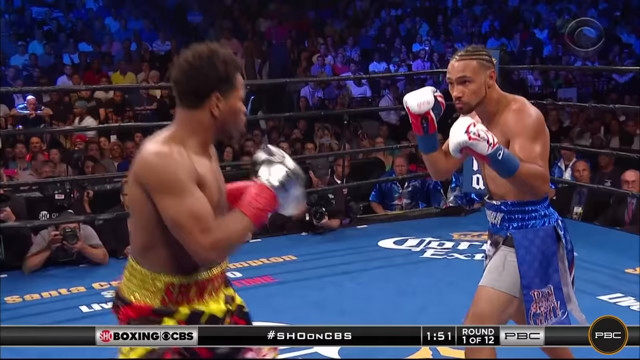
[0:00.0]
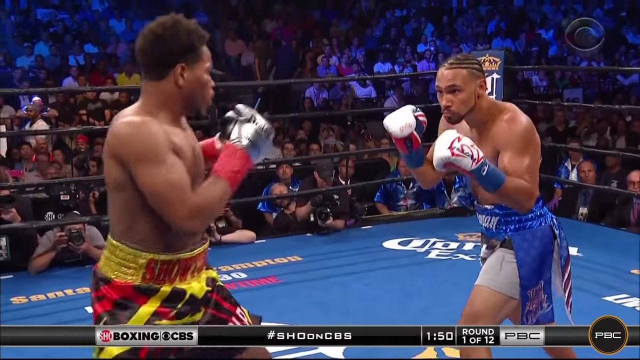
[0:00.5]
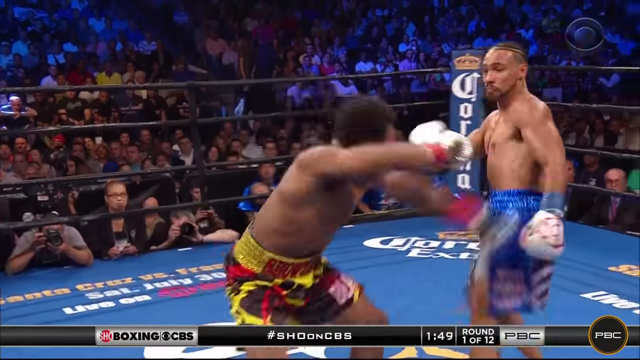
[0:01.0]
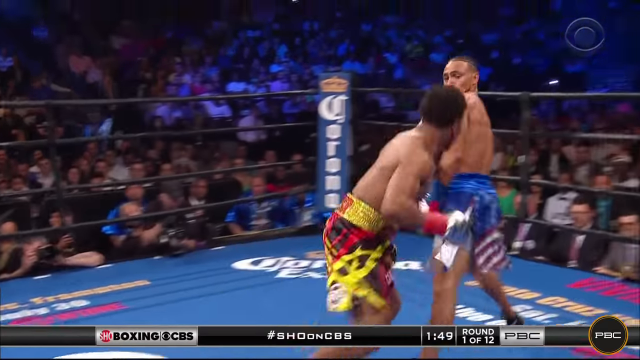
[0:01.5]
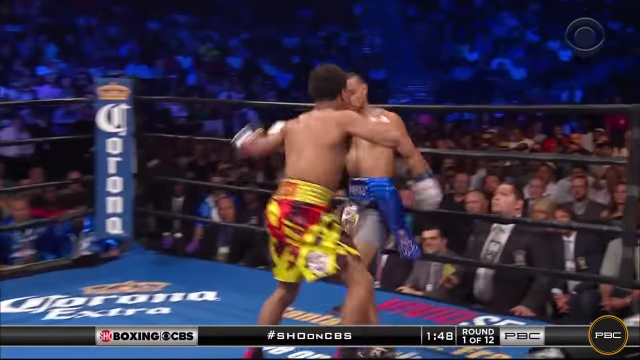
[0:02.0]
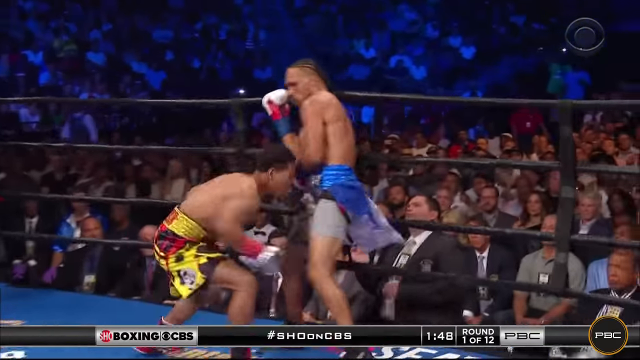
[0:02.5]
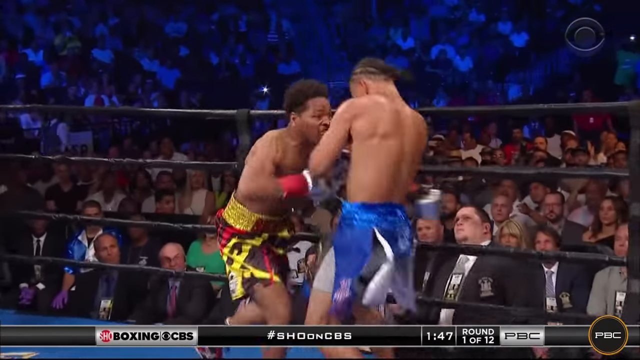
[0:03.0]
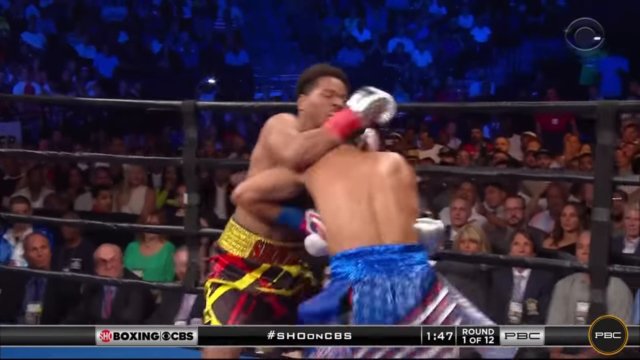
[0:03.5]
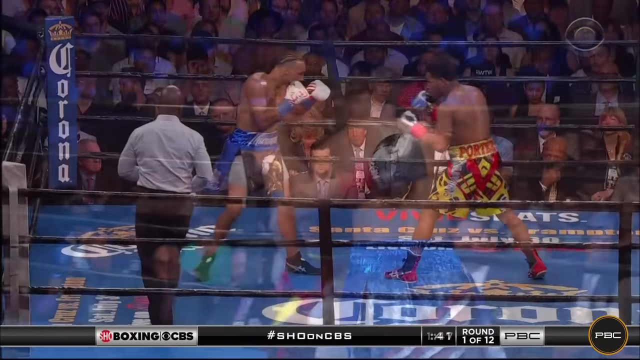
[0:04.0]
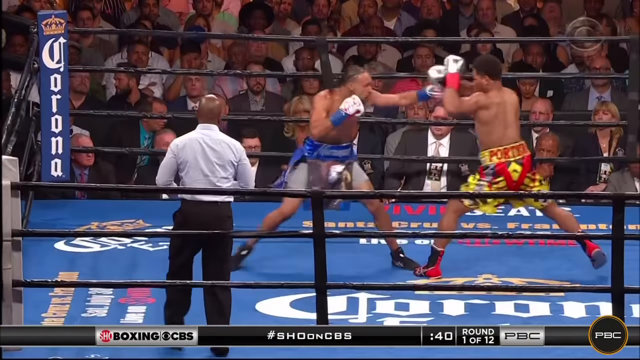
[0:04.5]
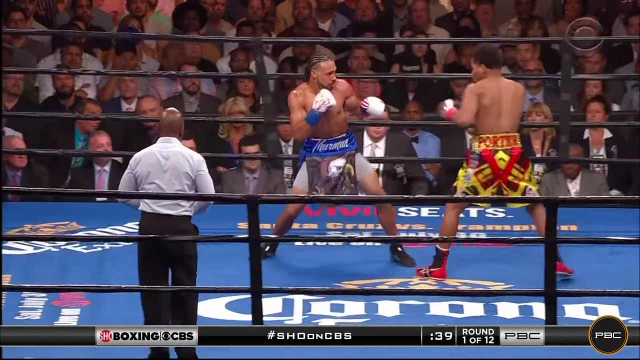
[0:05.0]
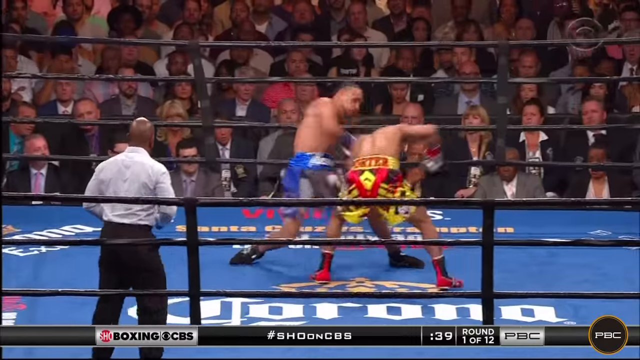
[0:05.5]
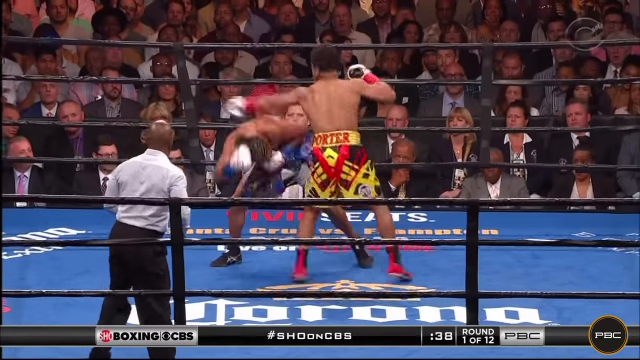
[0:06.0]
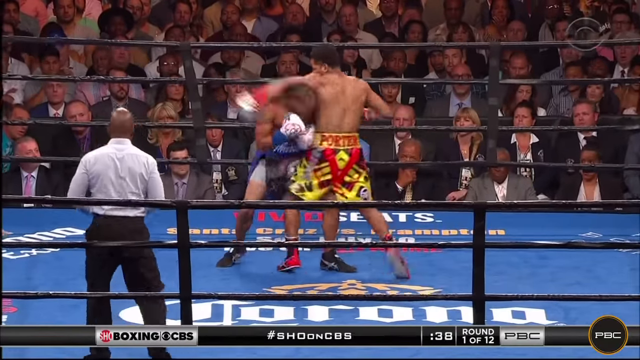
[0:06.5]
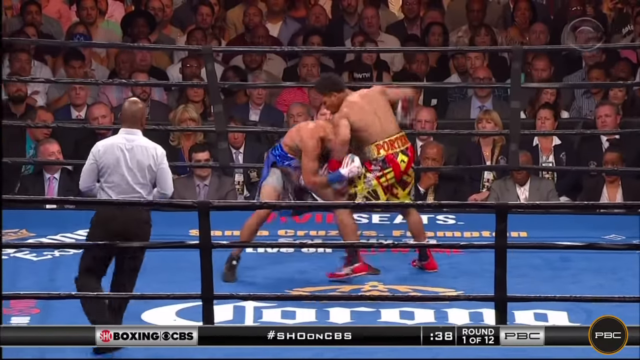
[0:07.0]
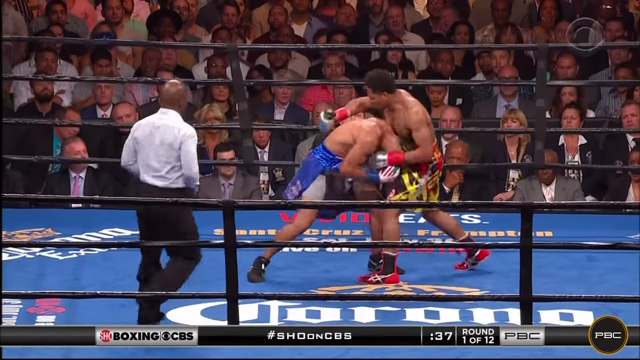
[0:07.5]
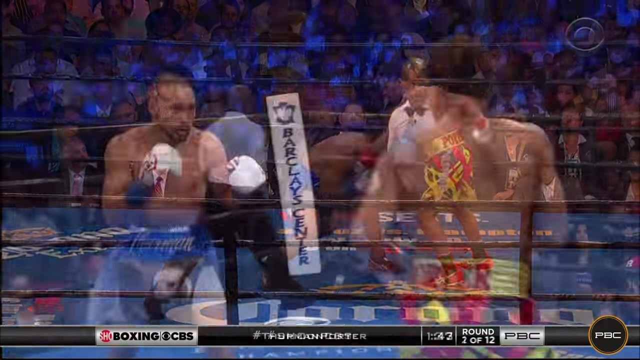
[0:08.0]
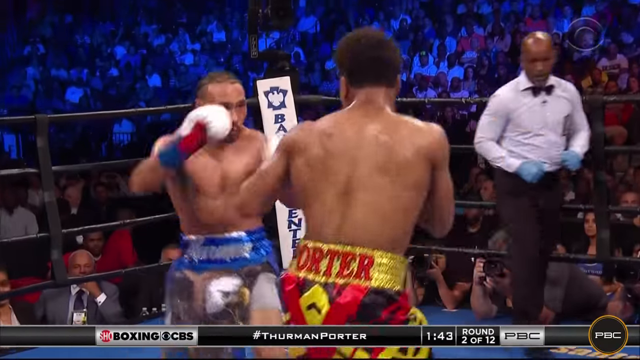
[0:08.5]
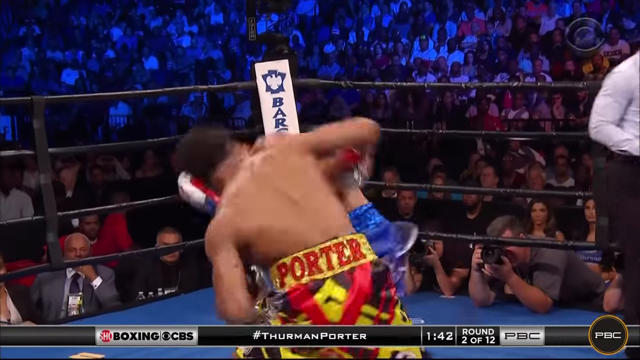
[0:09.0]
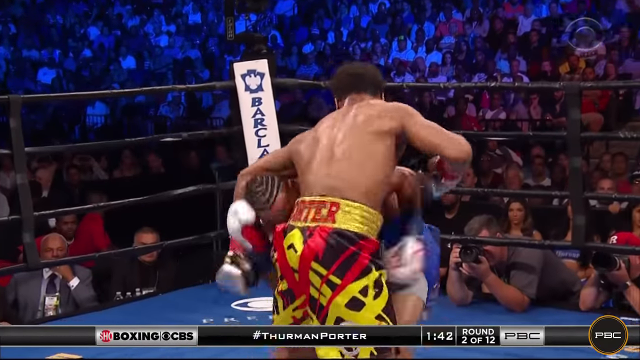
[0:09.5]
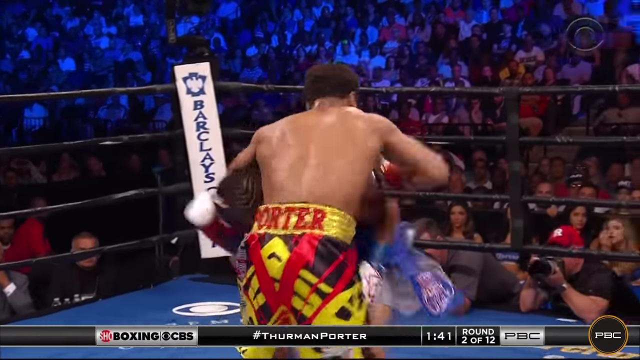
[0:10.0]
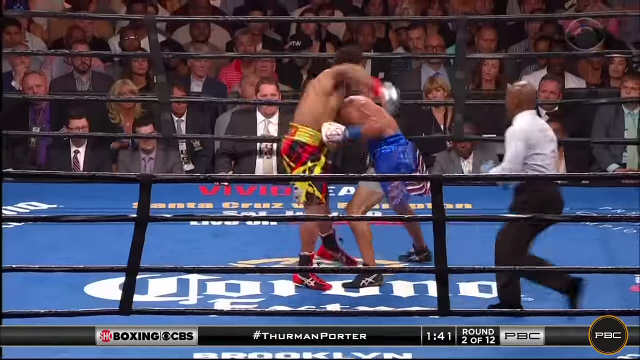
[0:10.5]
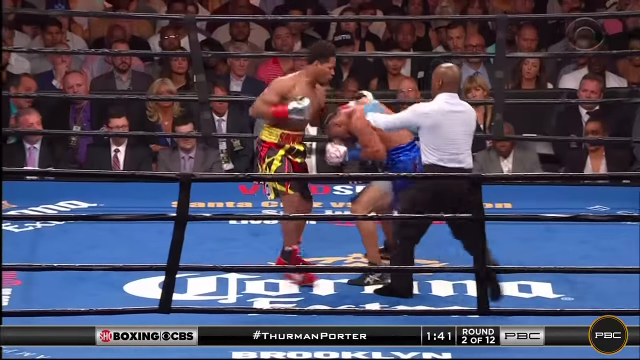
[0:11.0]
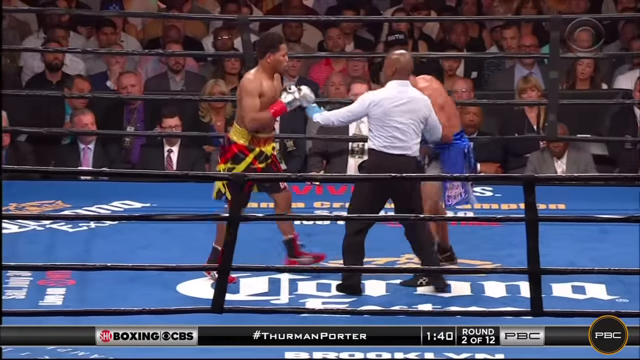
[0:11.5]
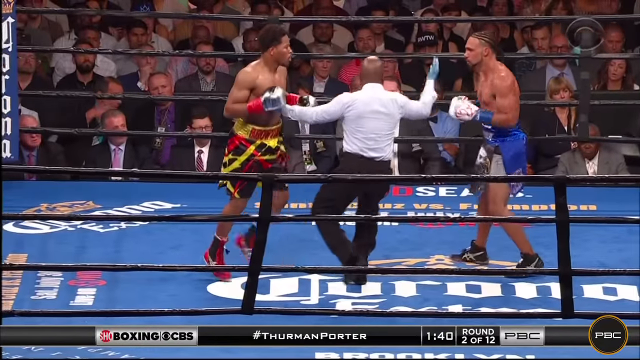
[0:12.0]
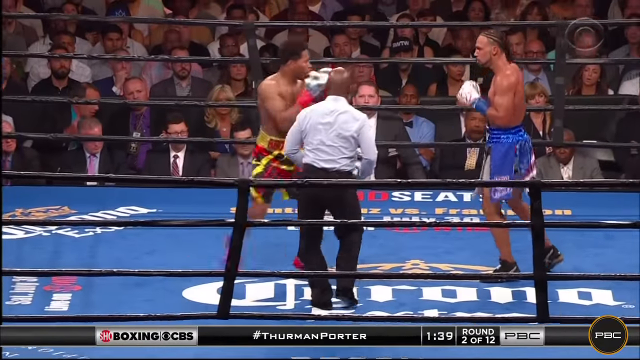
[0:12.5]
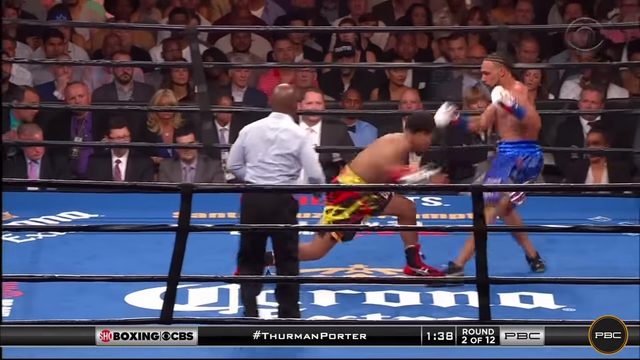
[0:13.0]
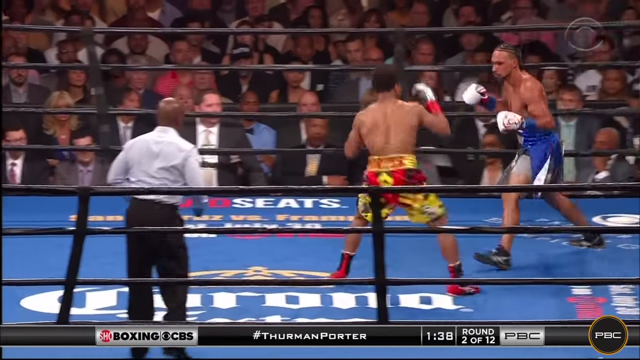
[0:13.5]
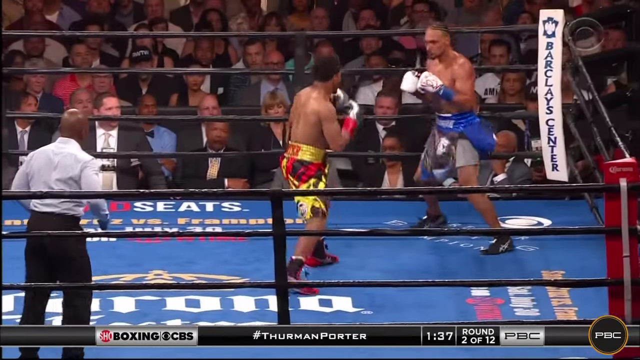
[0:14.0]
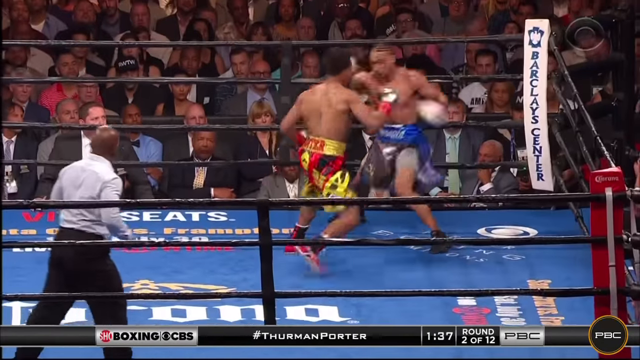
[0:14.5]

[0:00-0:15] Two boxers fight in a boxing ring, throwing punches at each other with rapid speed. One boxer wears red, black, and yellow shorts and the other wears blue shorts; both wear white gloves. At the bottom of the screen a "#ThurmanPorter" hashtag is shown along with a boxing CBS logo, and the graphic indicates the first round of 12. Quick jump cuts move through the fight: the boxers fight in round 1 of 12, the video jumps to a later point in round 1, and then jumps to round 2 of 12, where they are fighting again. A referee wears a white long-sleeve shirt and long black pants. The ring has black ropes, four extended above the floor on each side. A crowd fills the seating all around the ring, many of them appearing to wear gray or black suits, watching intently as the aggressive match takes place.